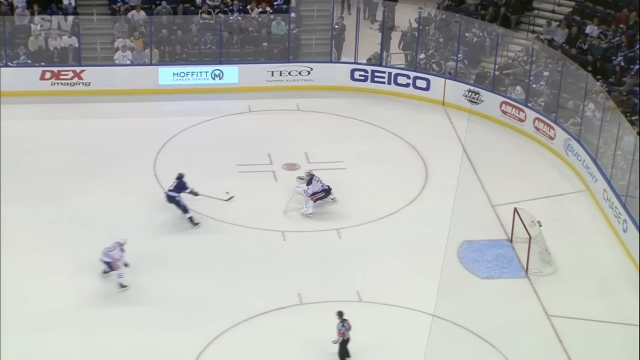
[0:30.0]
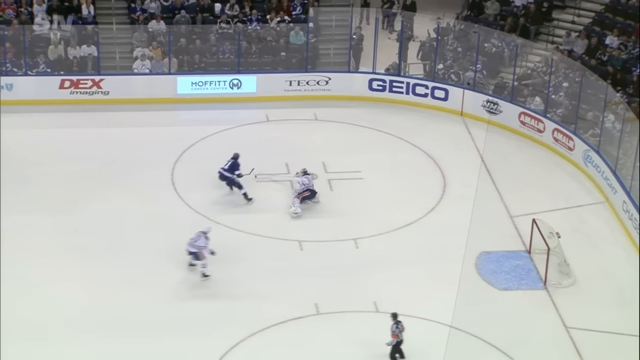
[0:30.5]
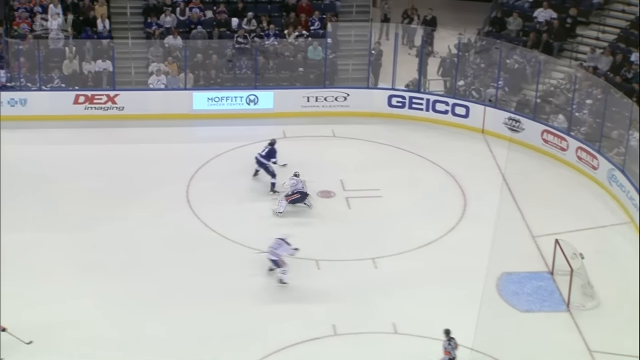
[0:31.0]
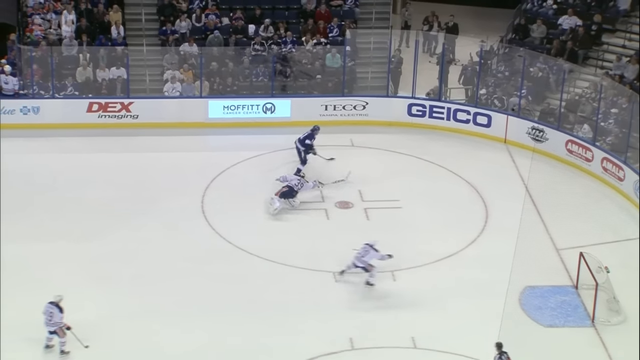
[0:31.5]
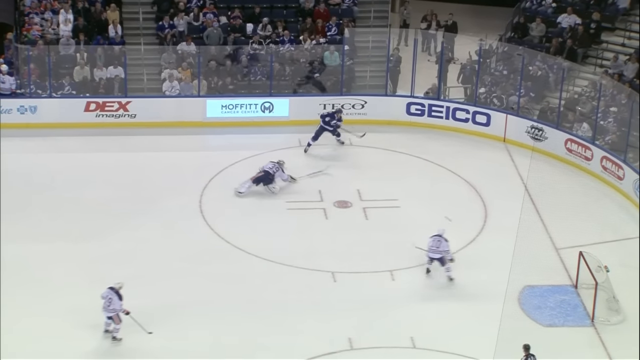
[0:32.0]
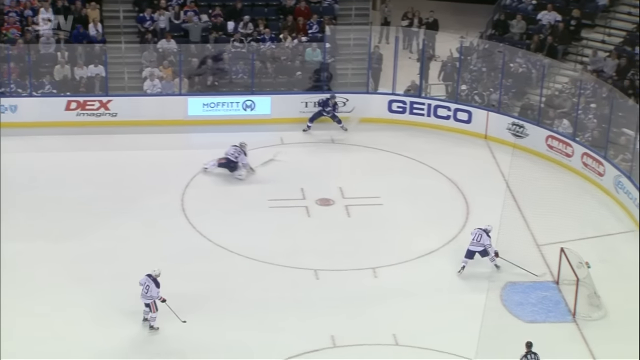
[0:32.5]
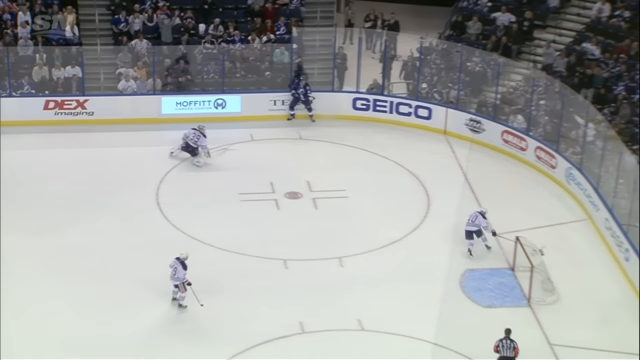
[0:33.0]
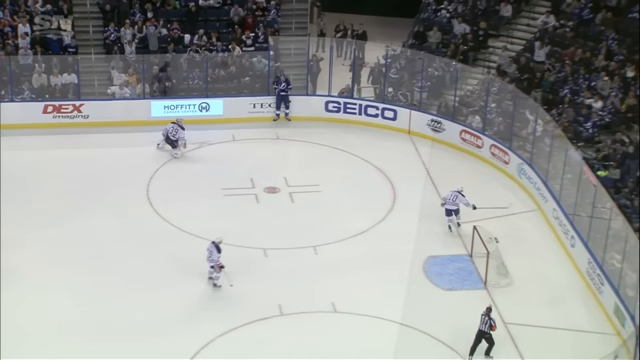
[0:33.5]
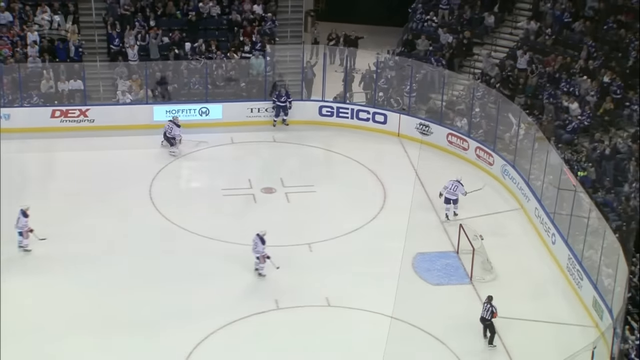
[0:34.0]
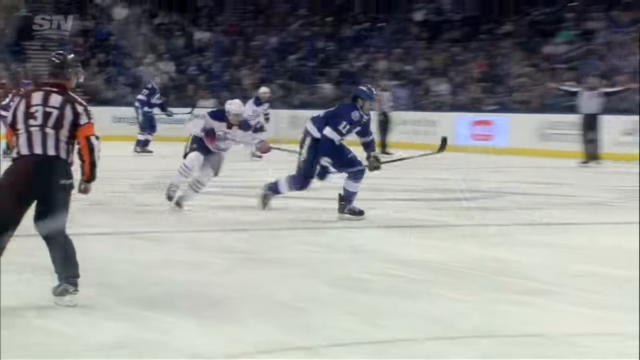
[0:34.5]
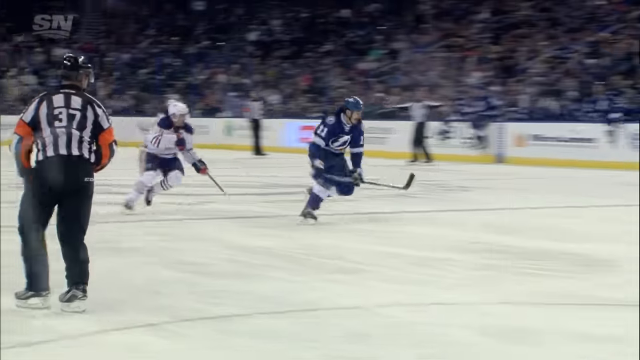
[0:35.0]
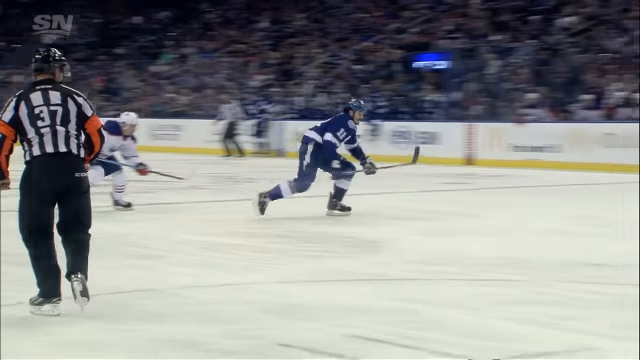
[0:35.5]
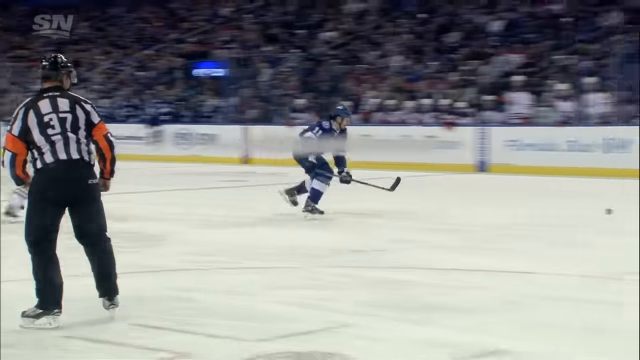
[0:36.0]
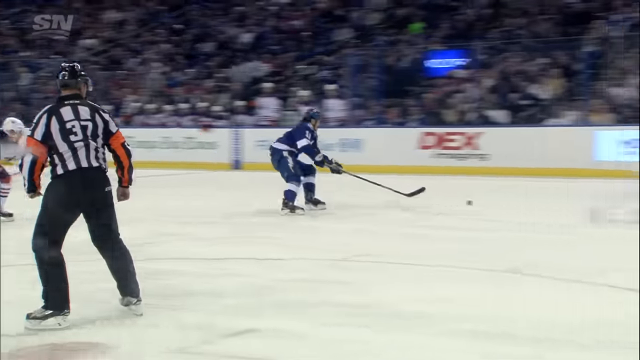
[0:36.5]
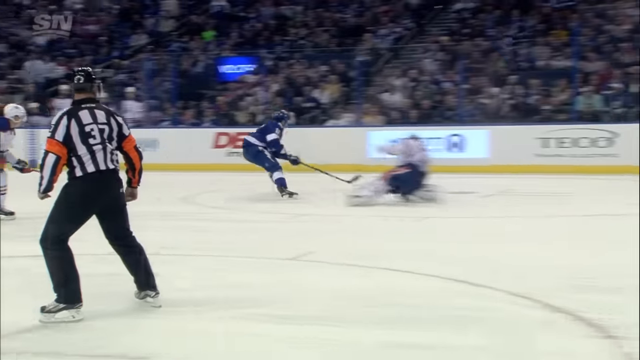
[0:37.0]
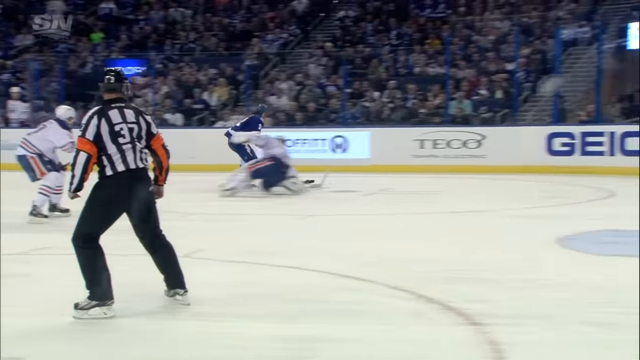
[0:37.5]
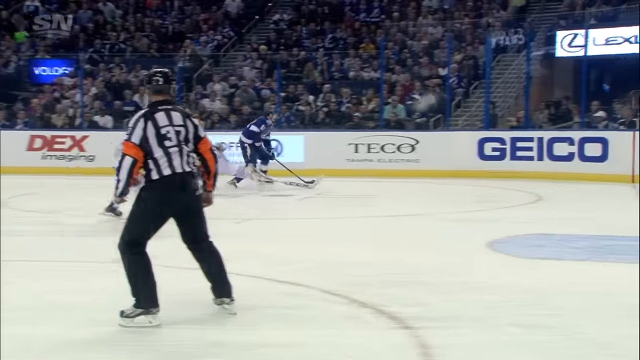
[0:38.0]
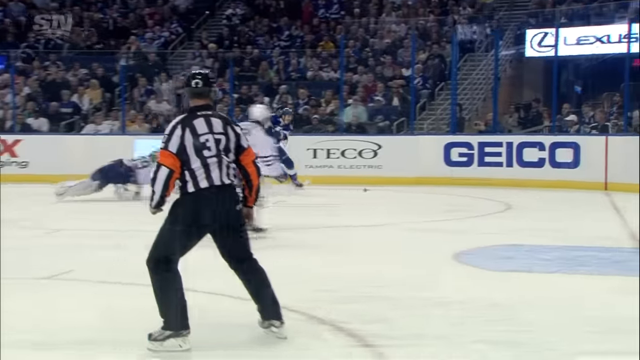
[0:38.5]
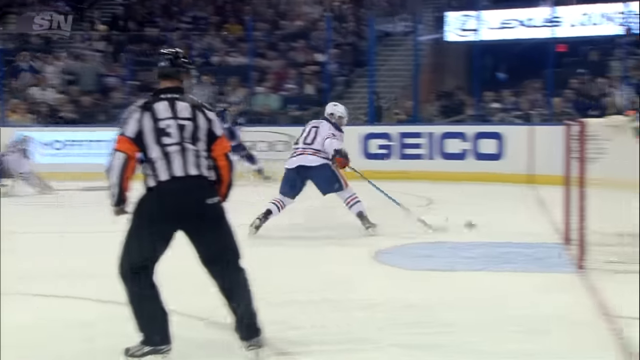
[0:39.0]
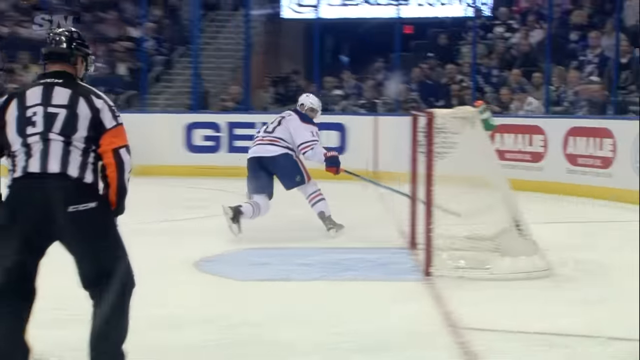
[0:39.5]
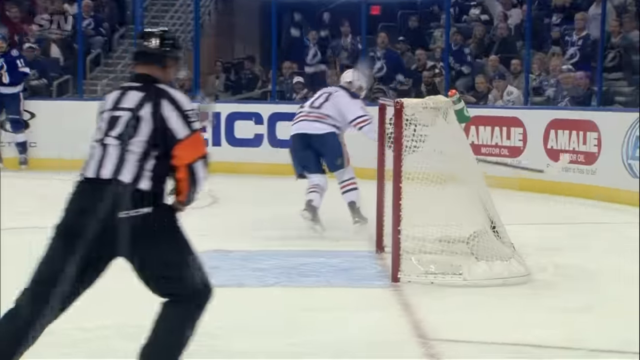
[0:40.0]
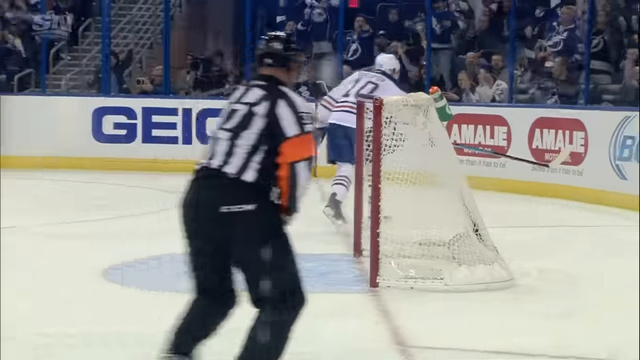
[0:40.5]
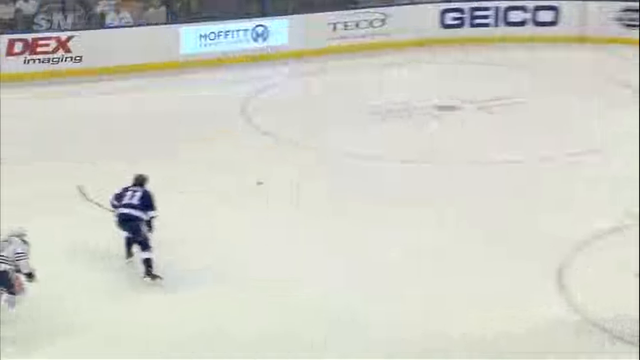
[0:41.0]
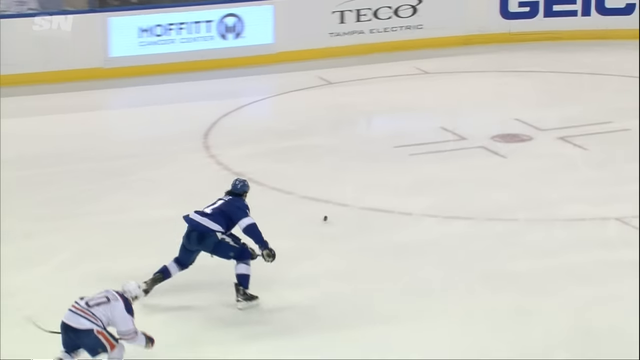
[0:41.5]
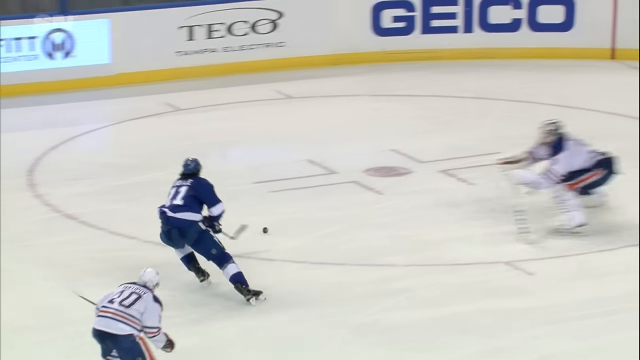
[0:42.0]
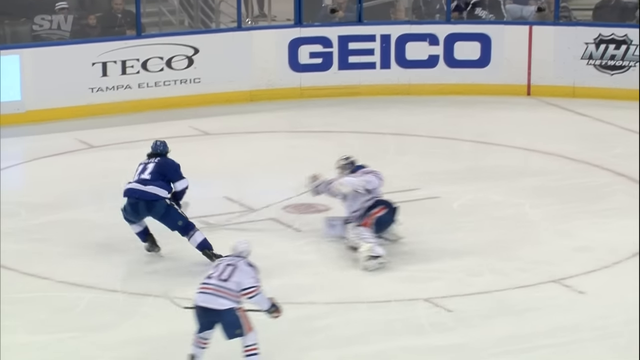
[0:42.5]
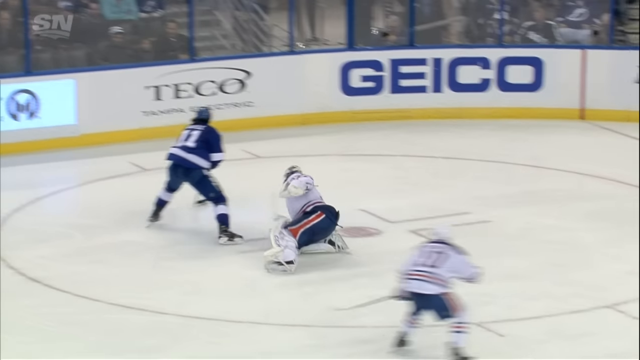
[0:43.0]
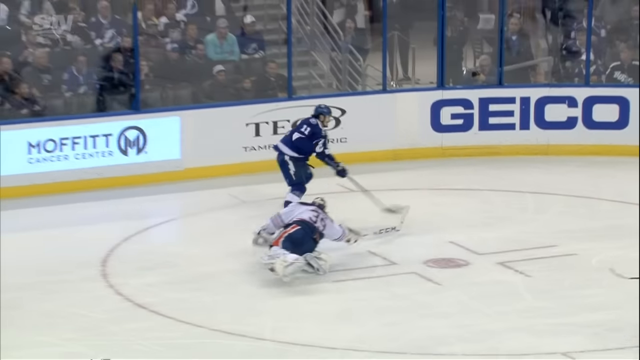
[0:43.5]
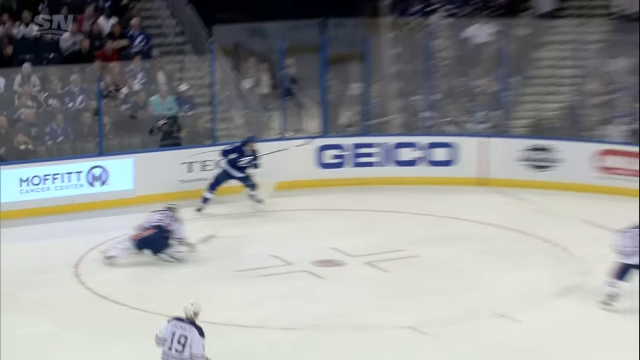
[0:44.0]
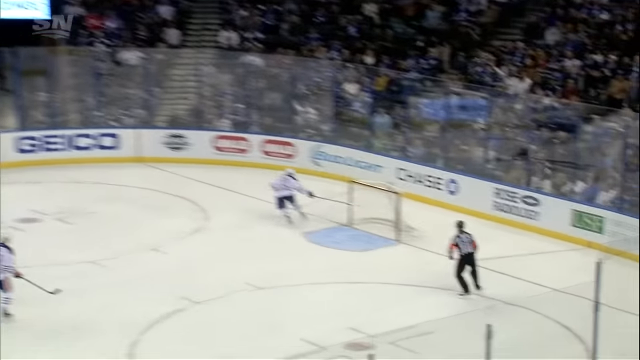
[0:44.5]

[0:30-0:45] An overhead view shows what appears to be a replay of the goal in slow motion. The goalie is pretty far out from his area, trying to meet the player as he comes down, but does not make it. The player shuffles the puck right by the goalie, and then it goes past one of the defenders at the last second, who extends his hockey stick but is unable to stop it. Immediately, the fans get up, happy and cheering because of the goal.